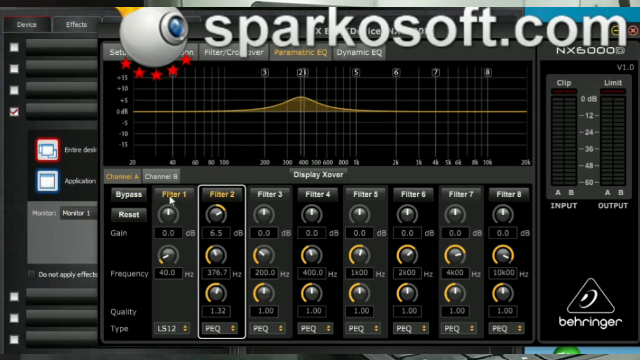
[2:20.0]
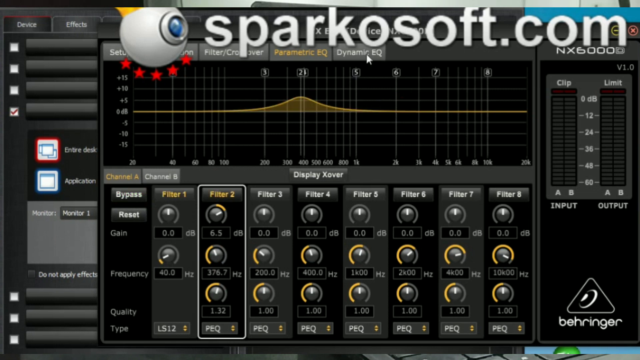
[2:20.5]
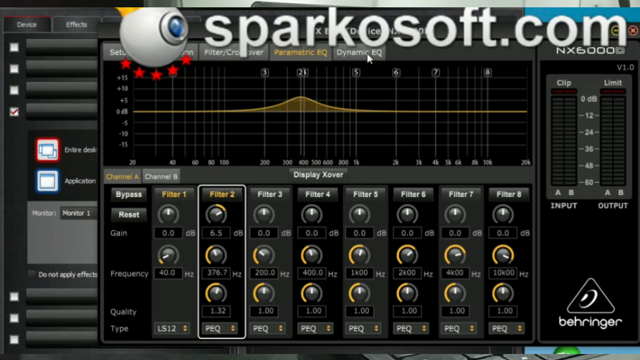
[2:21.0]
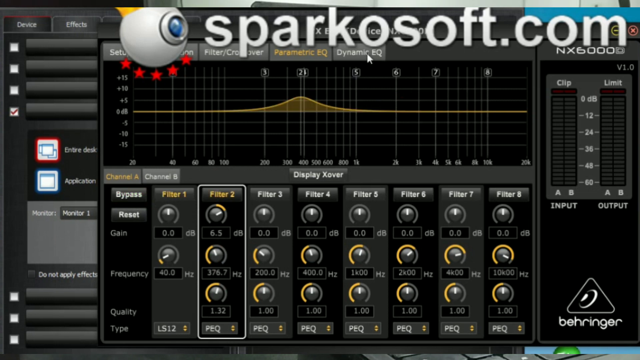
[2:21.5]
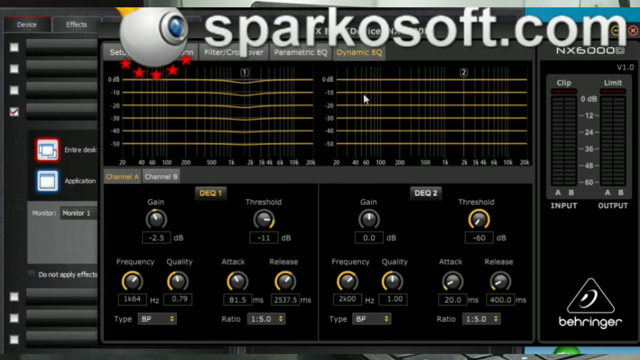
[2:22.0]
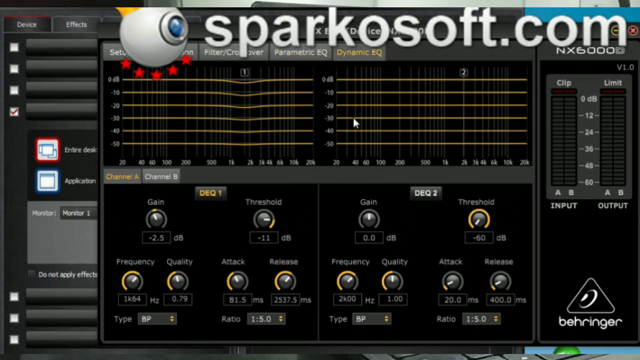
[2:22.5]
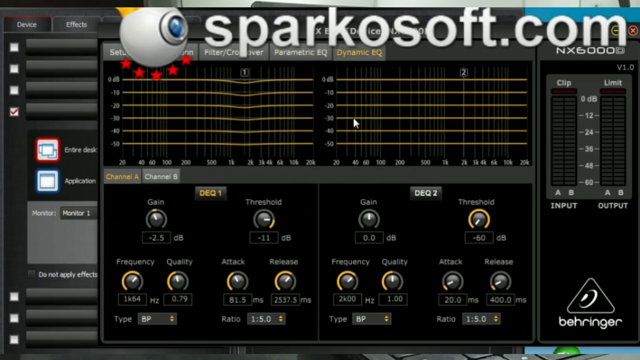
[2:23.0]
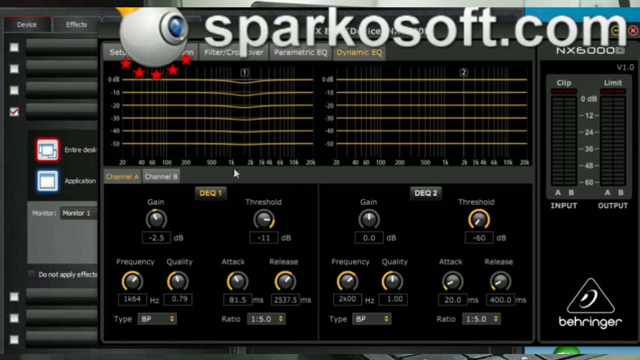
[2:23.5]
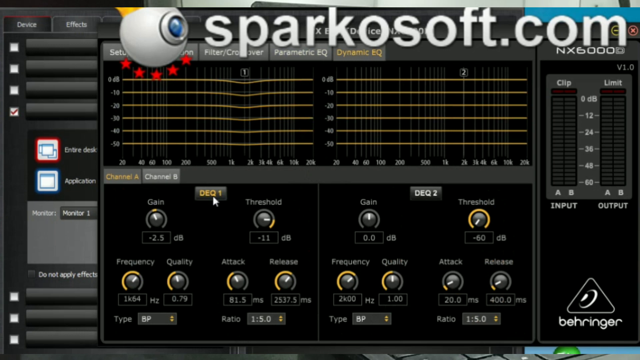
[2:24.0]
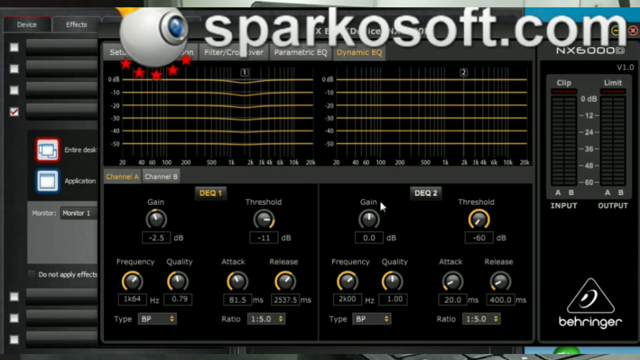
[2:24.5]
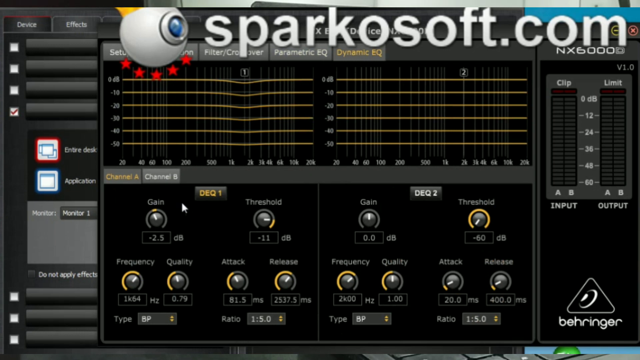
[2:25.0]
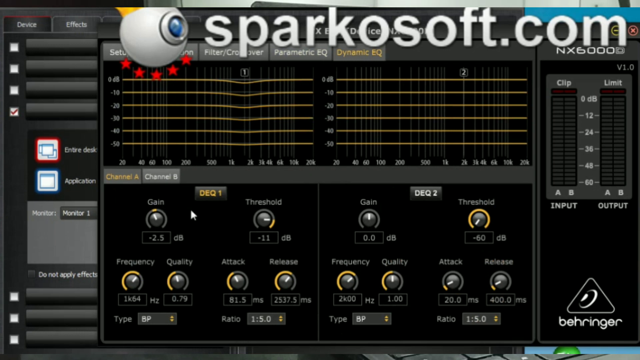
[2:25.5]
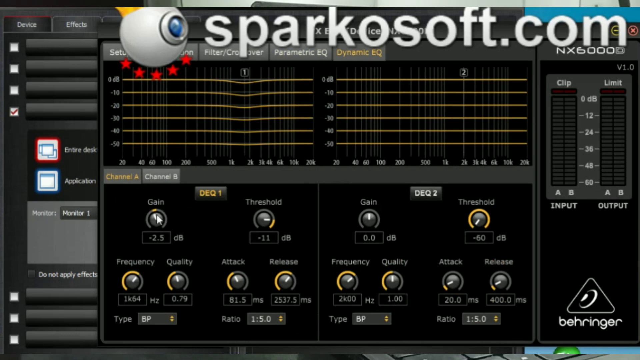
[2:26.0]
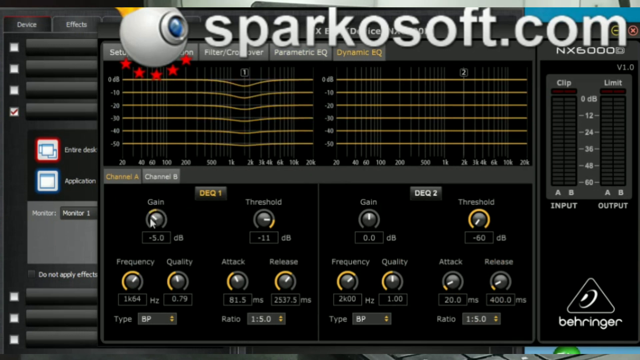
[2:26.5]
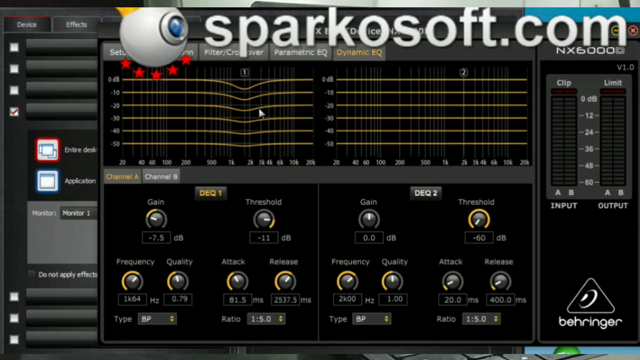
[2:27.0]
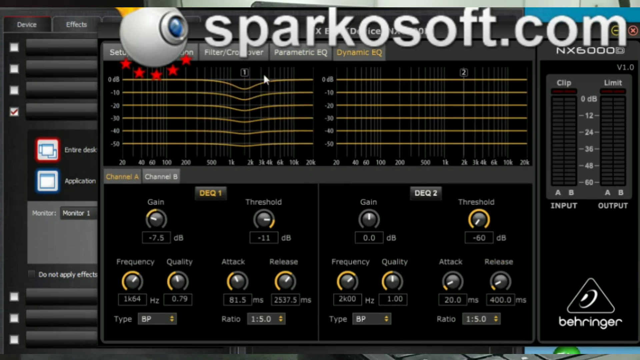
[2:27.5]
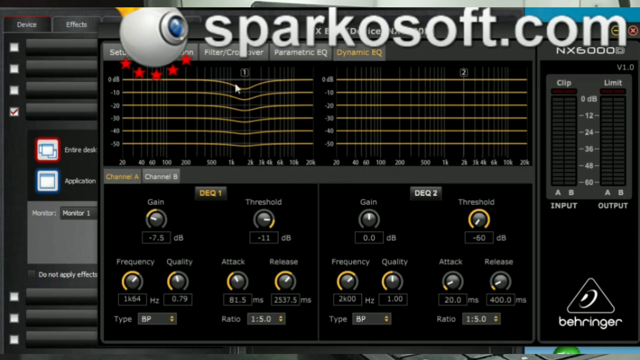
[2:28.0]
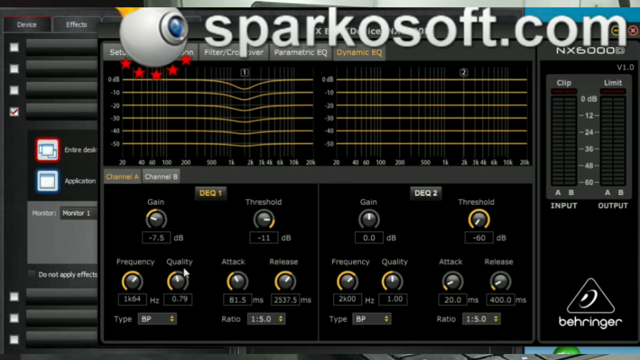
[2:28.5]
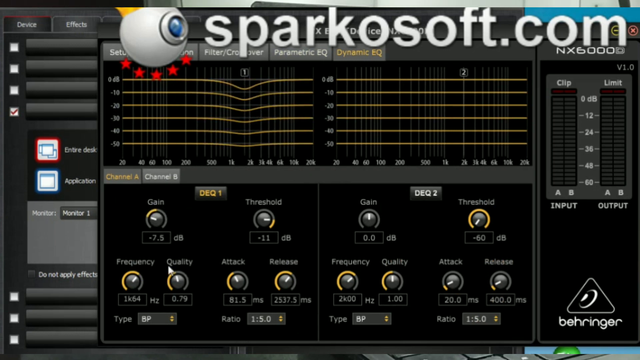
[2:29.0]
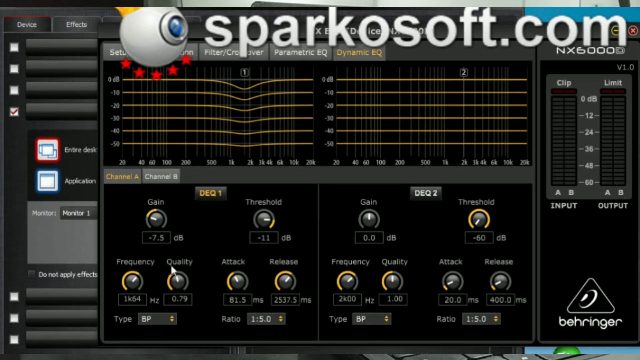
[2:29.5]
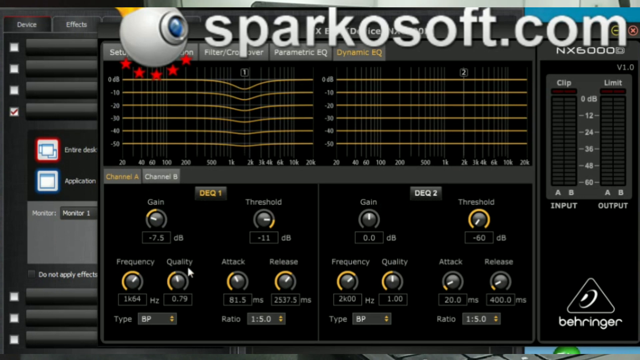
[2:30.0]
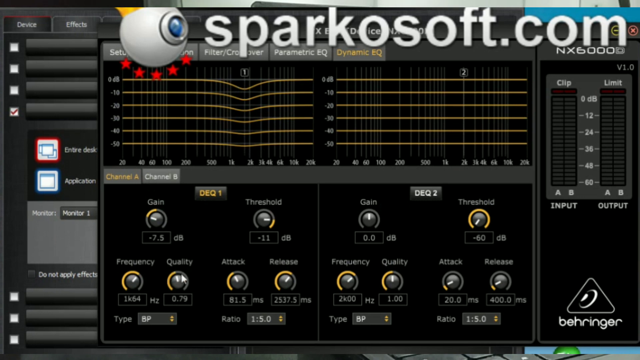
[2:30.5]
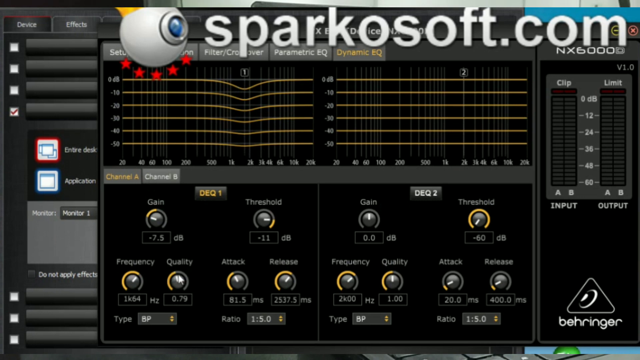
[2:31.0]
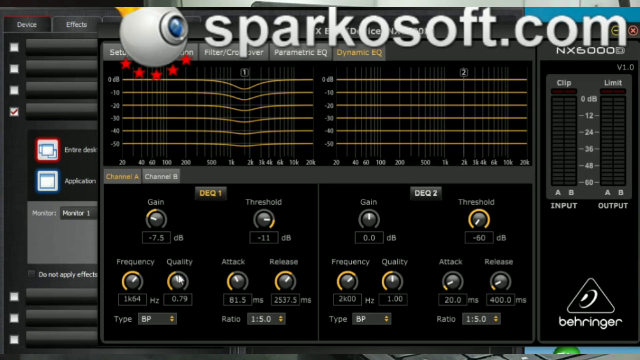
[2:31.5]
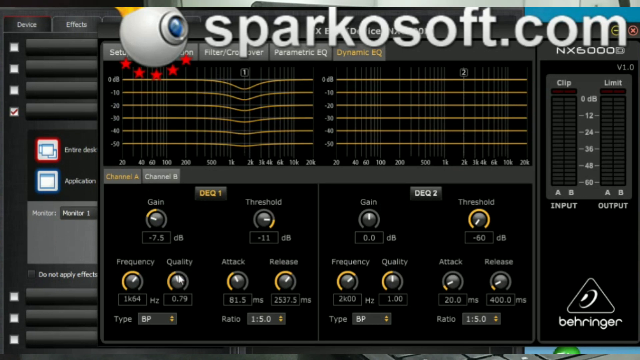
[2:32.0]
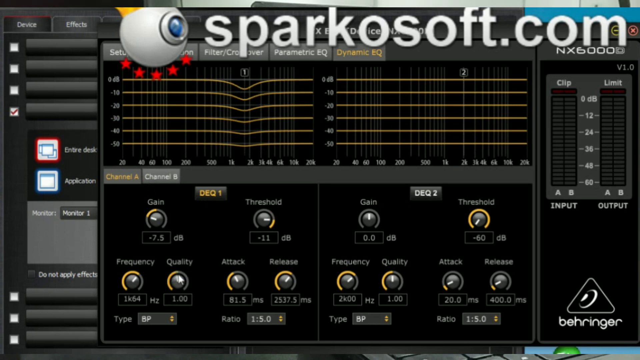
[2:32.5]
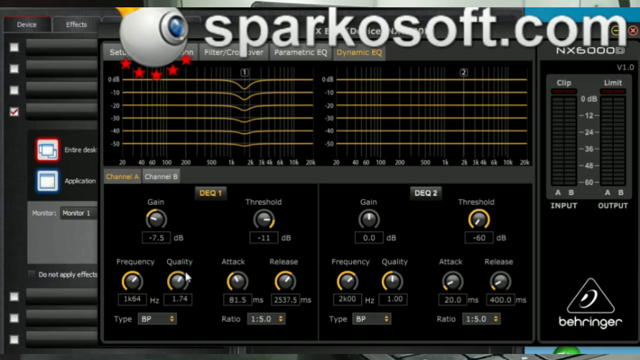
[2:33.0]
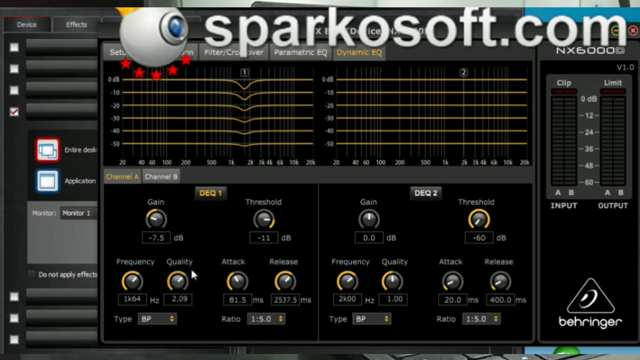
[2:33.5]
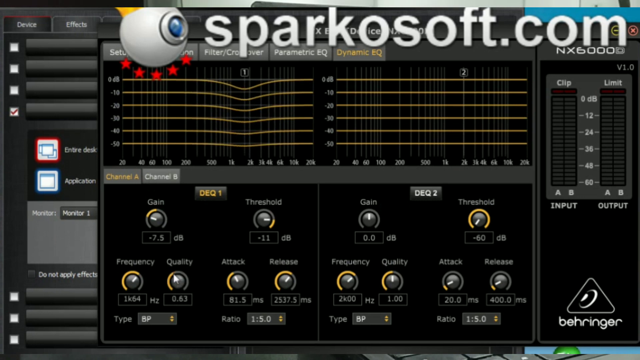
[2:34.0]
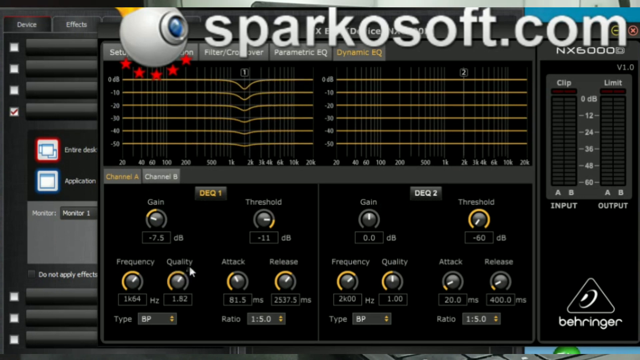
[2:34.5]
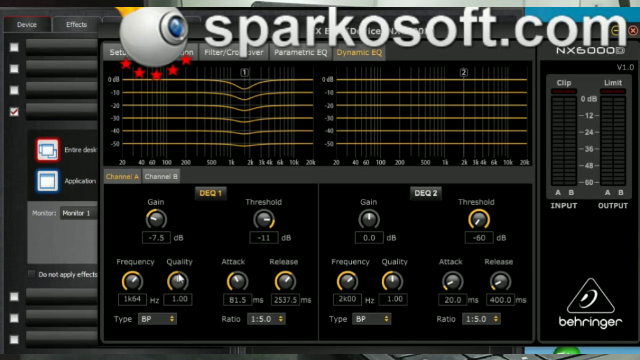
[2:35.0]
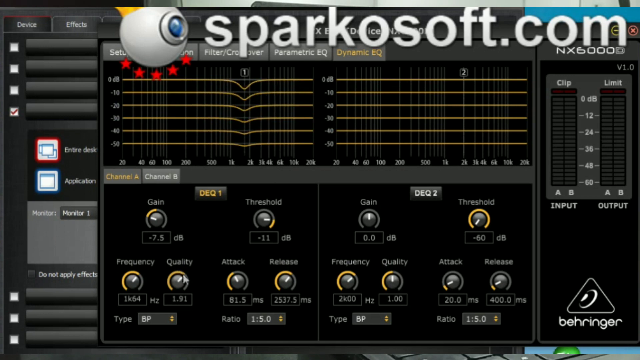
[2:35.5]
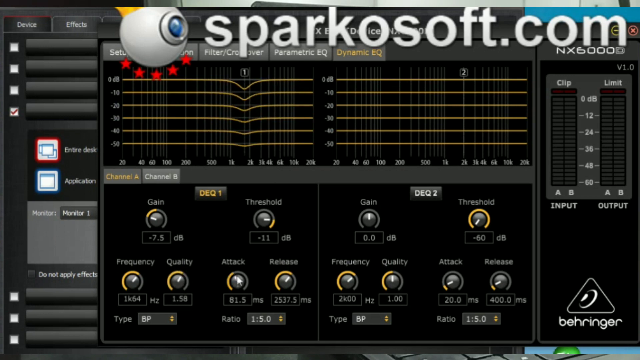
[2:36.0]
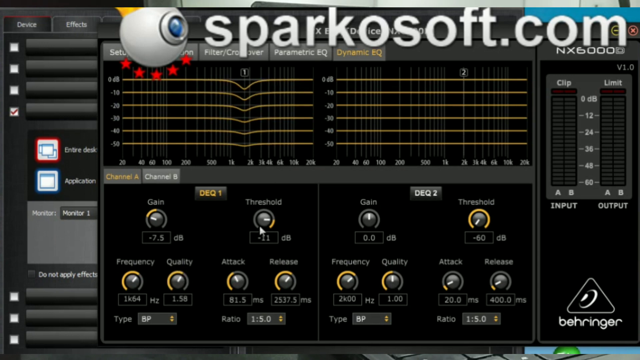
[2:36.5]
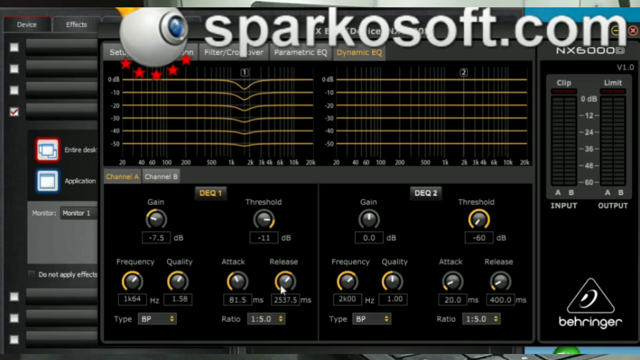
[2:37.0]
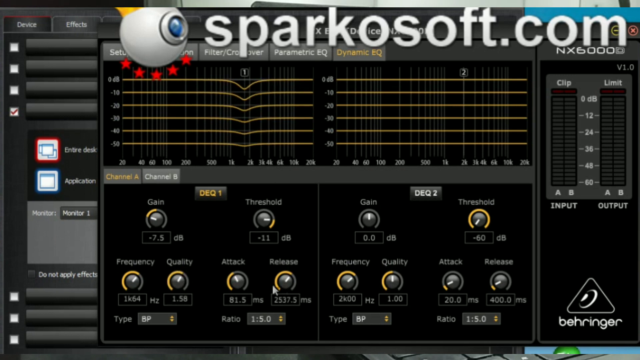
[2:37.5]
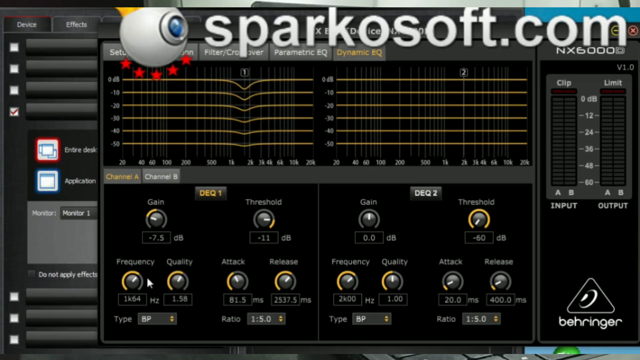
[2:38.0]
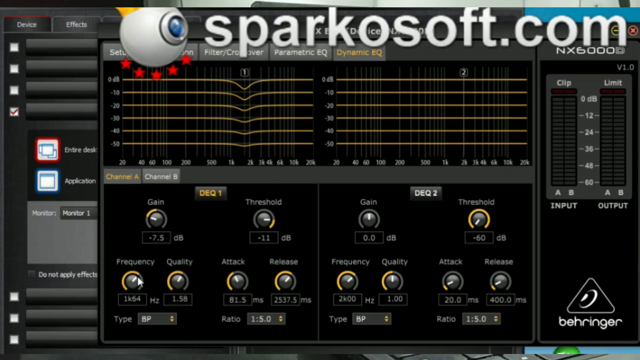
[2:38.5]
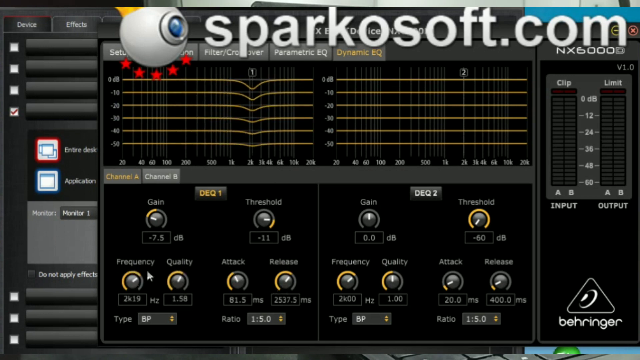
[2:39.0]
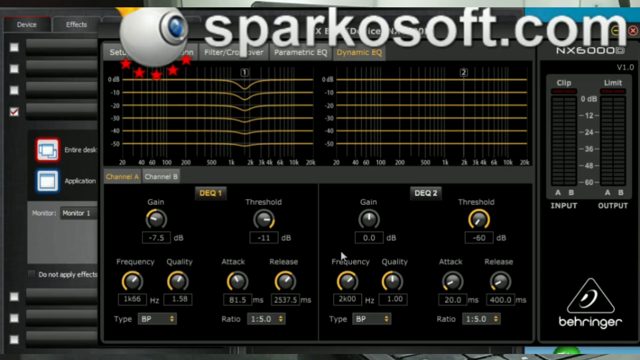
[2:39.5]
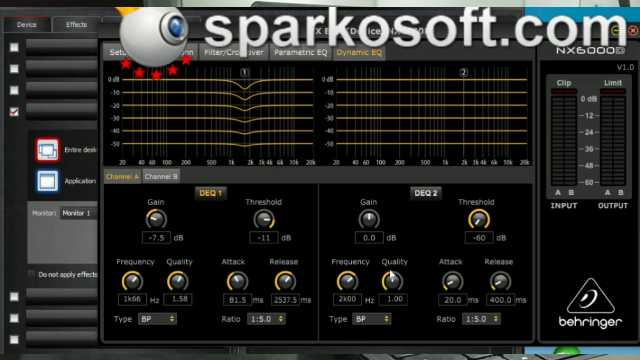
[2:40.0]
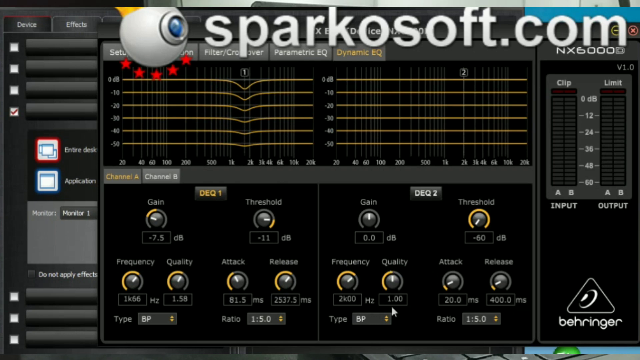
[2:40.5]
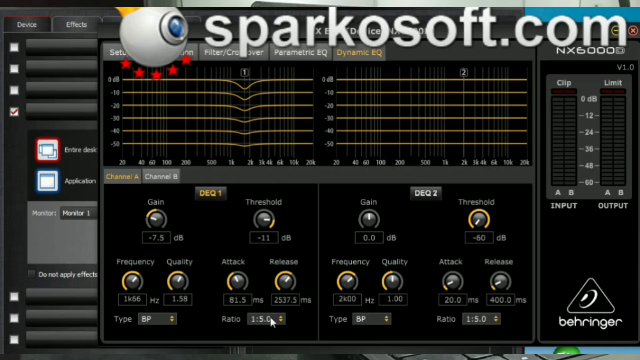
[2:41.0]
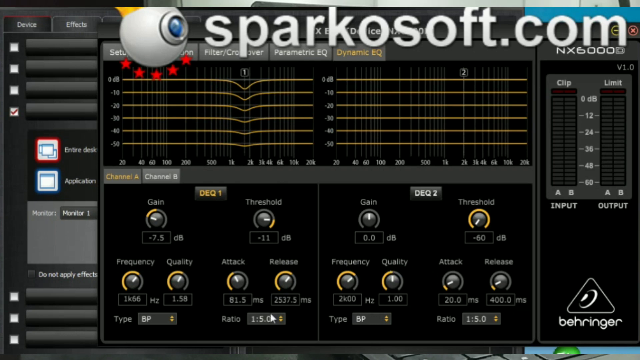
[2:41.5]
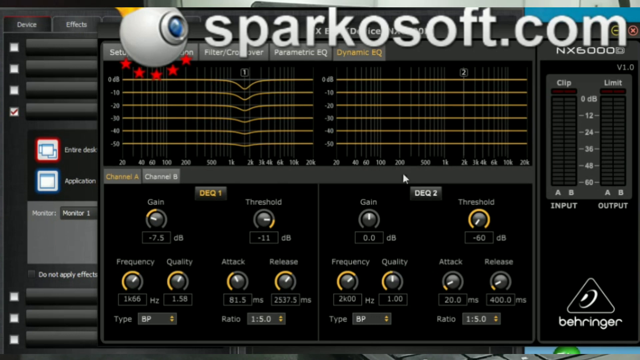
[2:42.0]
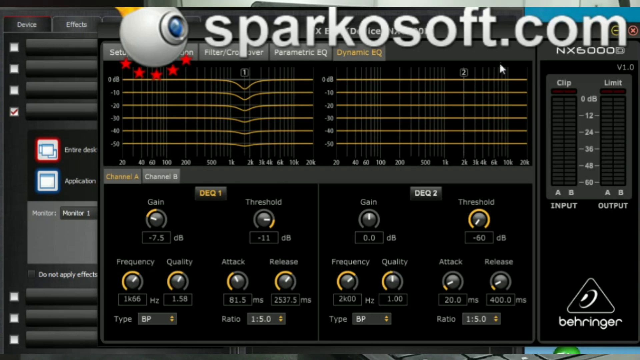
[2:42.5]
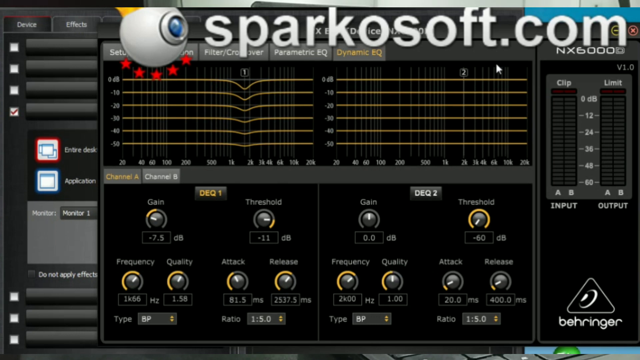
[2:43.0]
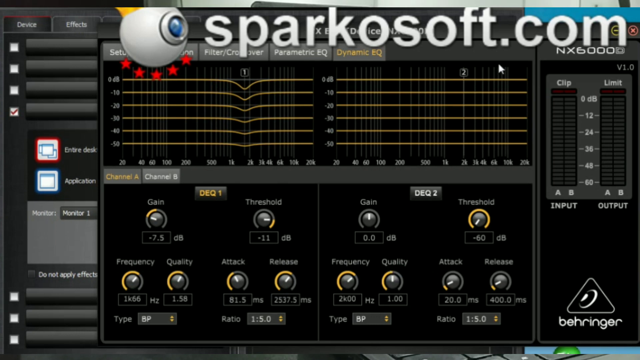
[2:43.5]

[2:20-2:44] The program is still on screen, starting on the parametric EQ tab. The user clicks over to the dynamic EQ tab and moves the mouse down to a section on the left labeled "DEQ1", on the channel A tab. The user moves a virtual knob labeled "gain" and the graph above changes, then moves a knob labeled "quality" and the graph changes again, then a knob labeled "frequency" and the graph changes again. On the right-hand side of the screen is an area called "DEQ2" with a graph above it, where the user does not change anything. Both areas have the same virtual knobs, labeled "Gain", "Threshold", "Frequency", "Quality", "Attack" and "Release". On the far right, the label "NX6000D" is visible at the top of the screen.